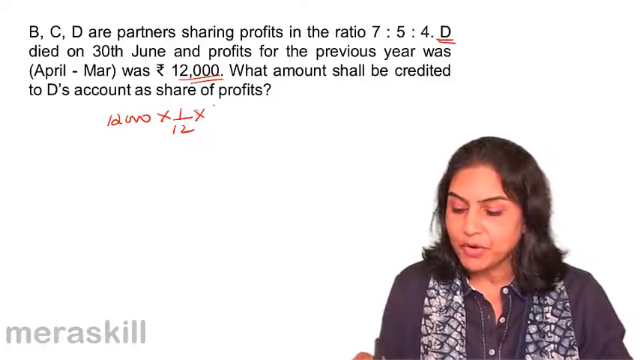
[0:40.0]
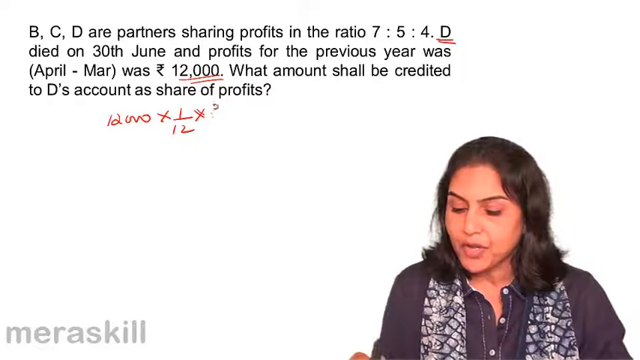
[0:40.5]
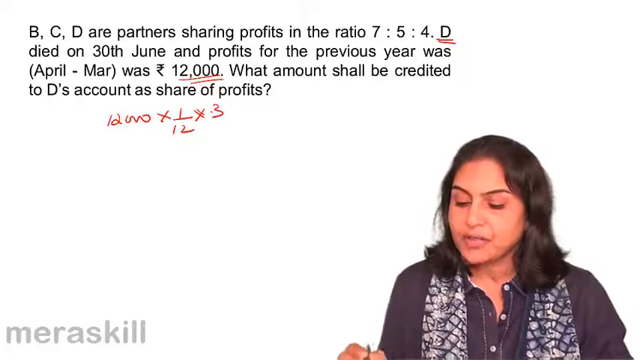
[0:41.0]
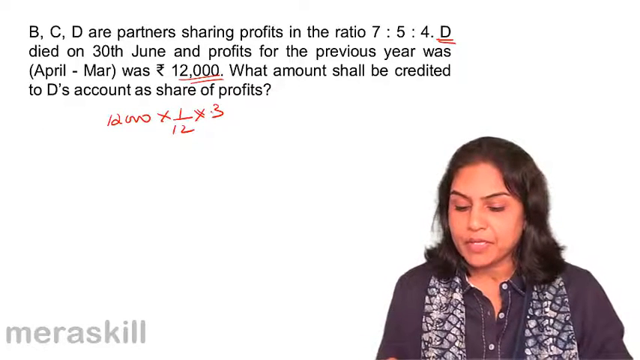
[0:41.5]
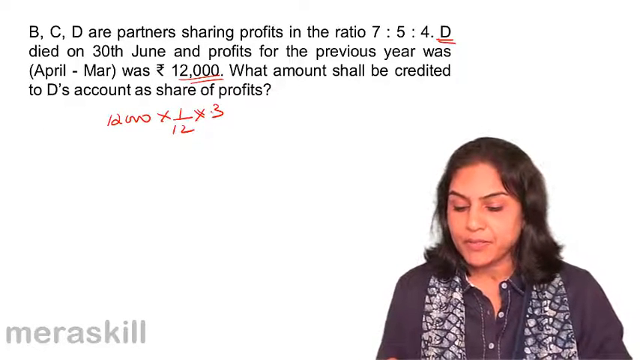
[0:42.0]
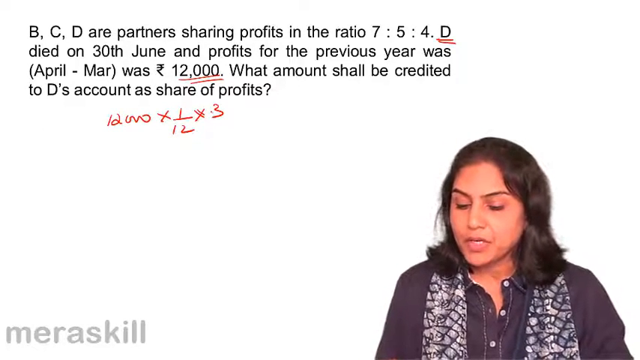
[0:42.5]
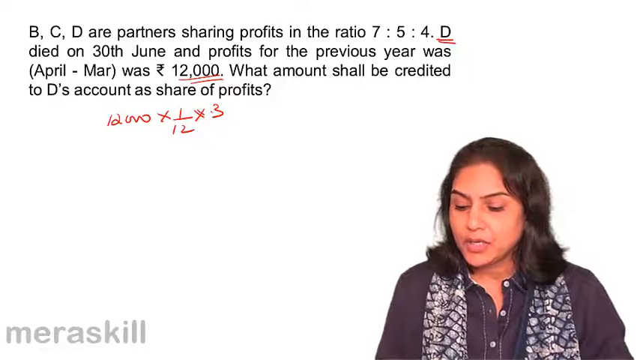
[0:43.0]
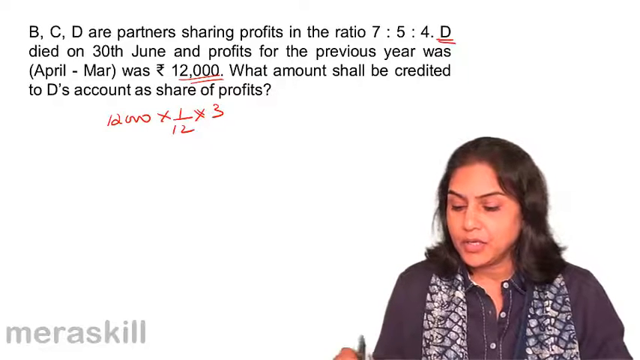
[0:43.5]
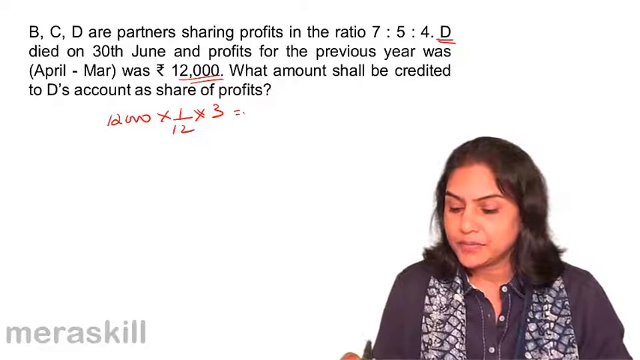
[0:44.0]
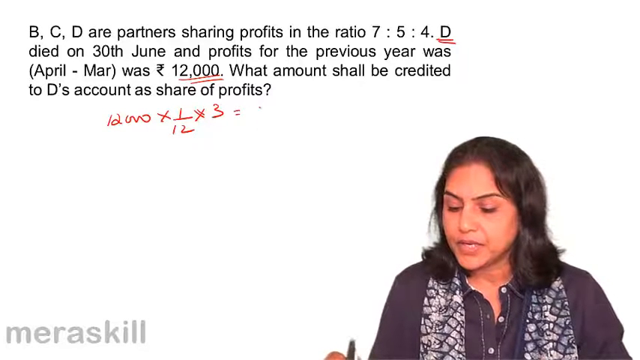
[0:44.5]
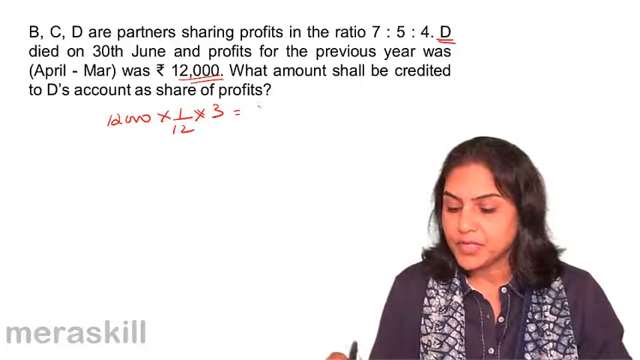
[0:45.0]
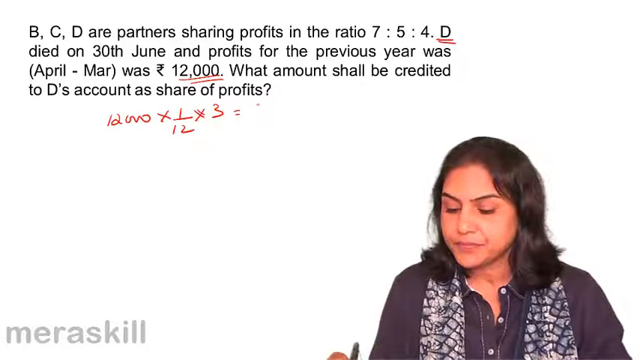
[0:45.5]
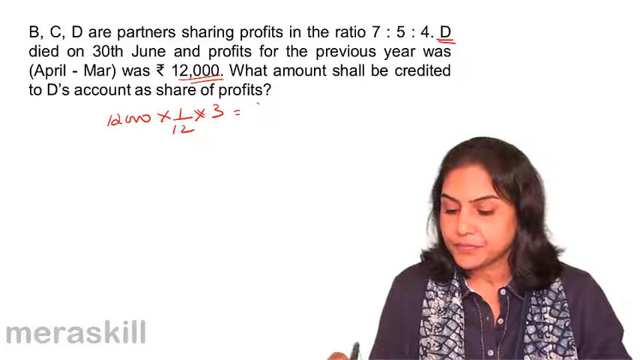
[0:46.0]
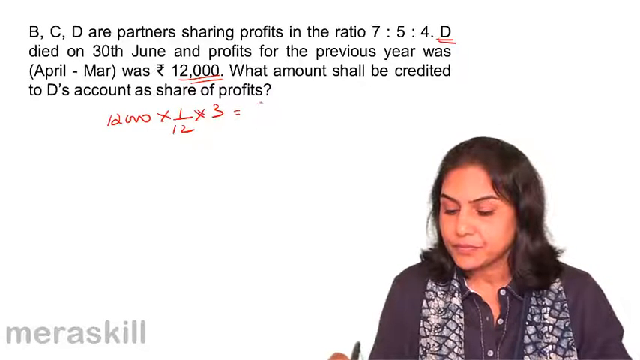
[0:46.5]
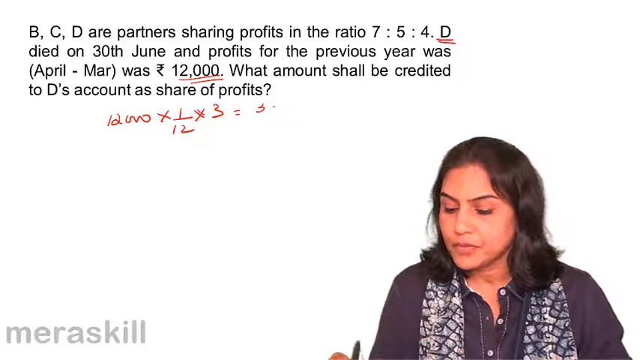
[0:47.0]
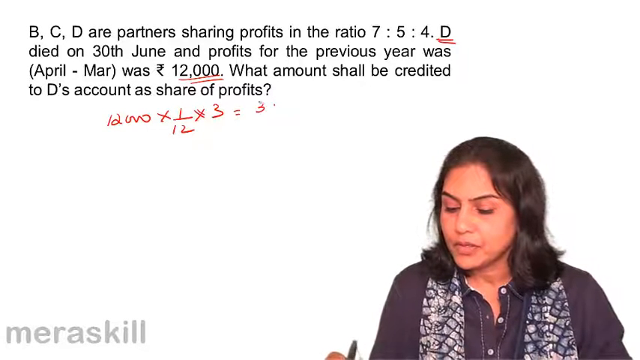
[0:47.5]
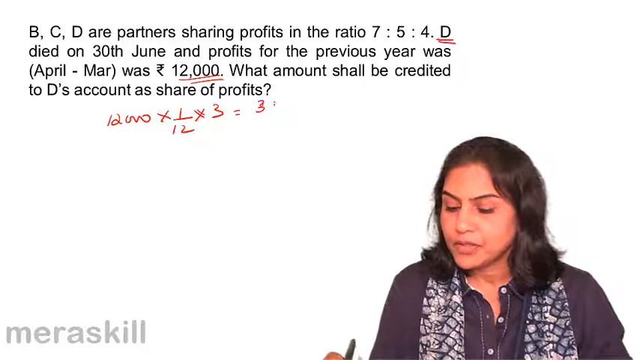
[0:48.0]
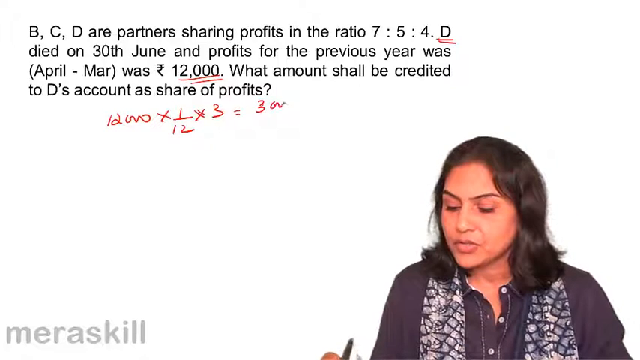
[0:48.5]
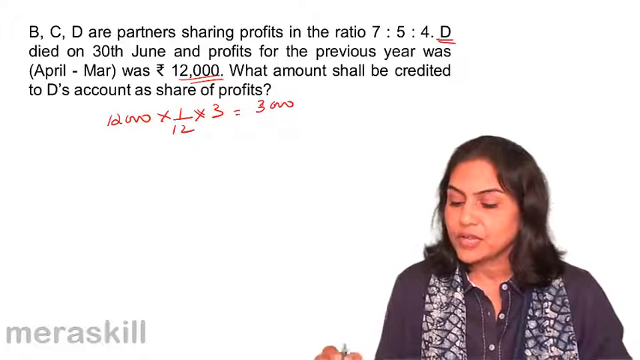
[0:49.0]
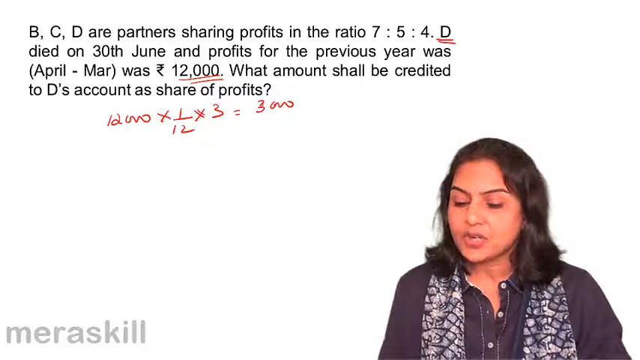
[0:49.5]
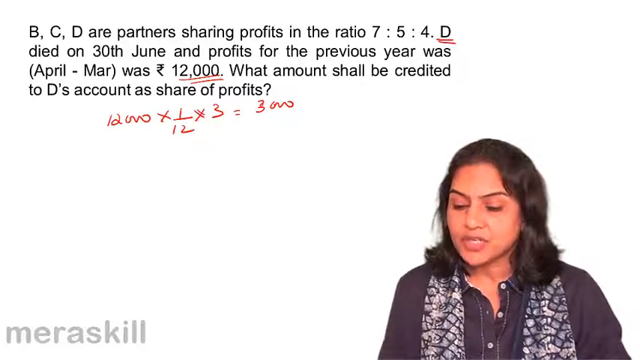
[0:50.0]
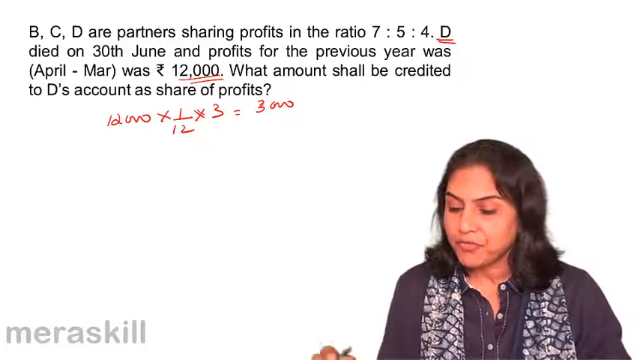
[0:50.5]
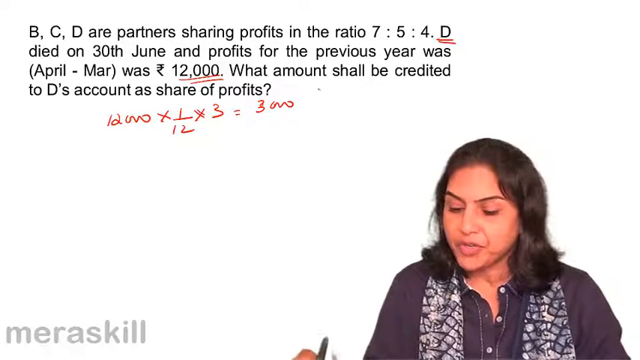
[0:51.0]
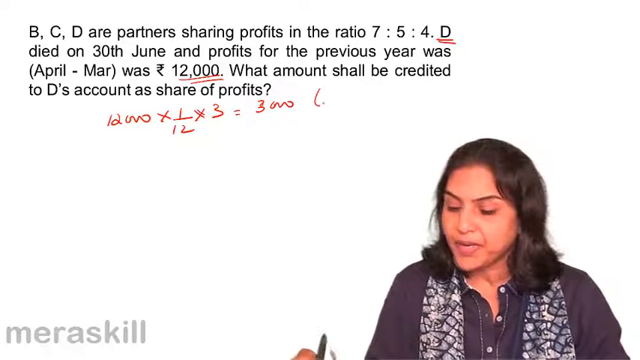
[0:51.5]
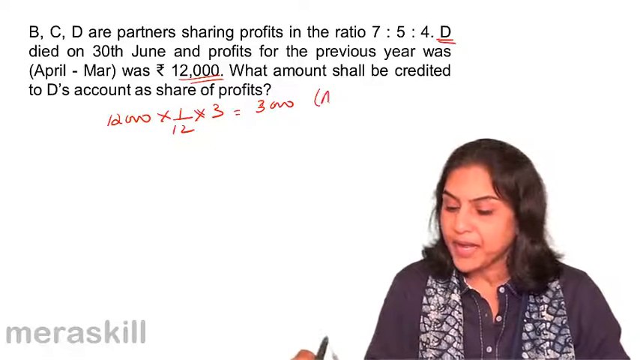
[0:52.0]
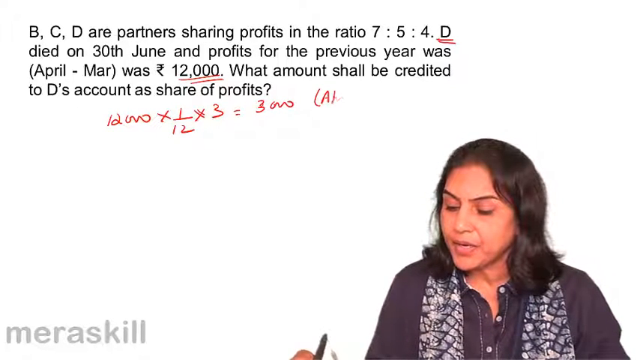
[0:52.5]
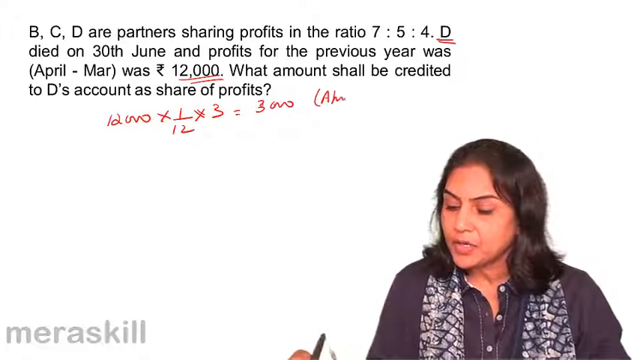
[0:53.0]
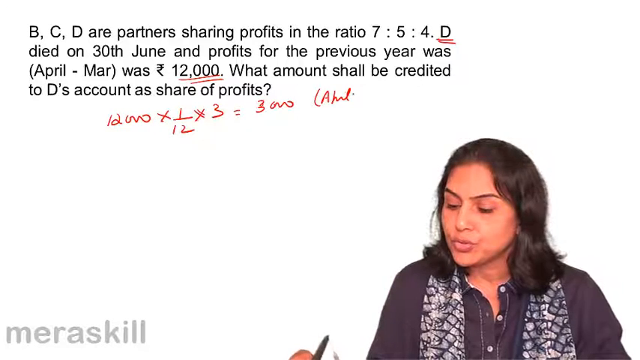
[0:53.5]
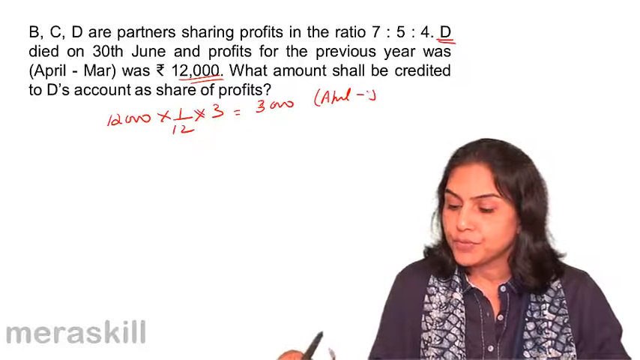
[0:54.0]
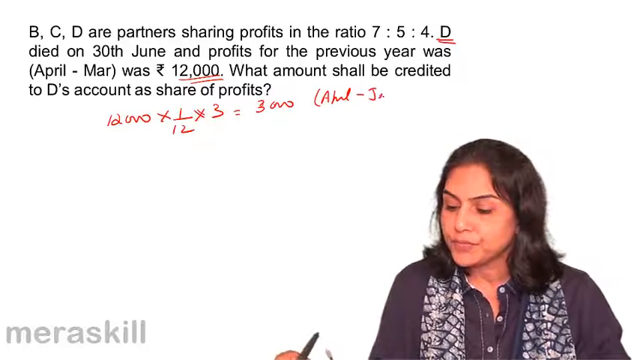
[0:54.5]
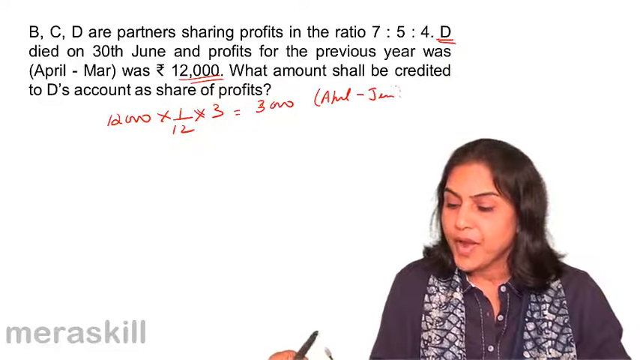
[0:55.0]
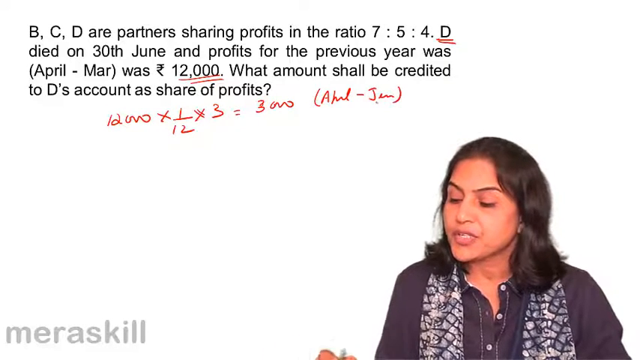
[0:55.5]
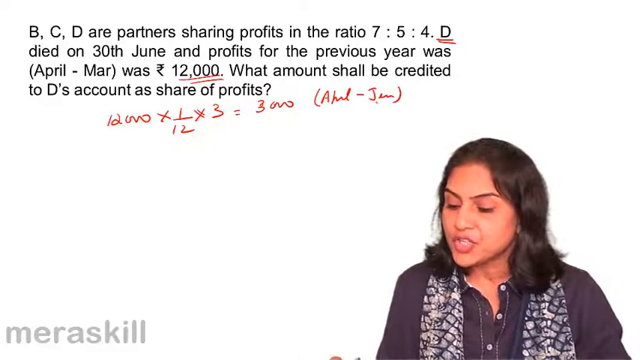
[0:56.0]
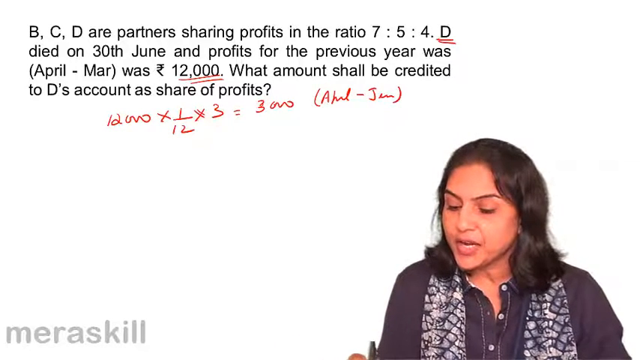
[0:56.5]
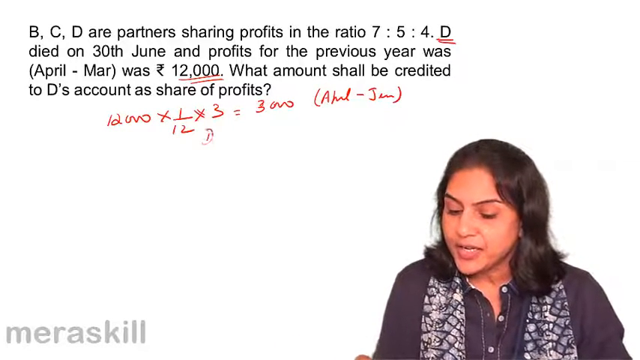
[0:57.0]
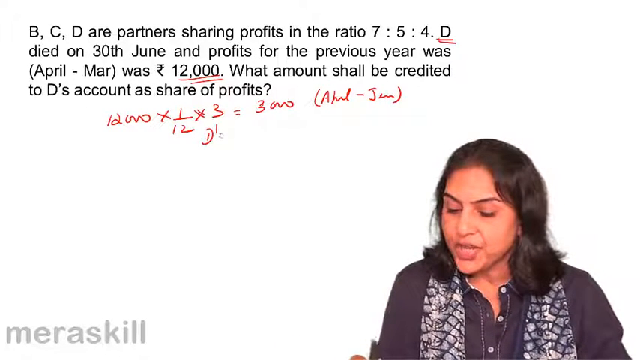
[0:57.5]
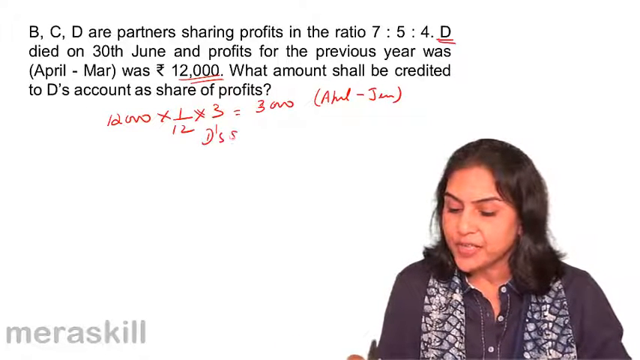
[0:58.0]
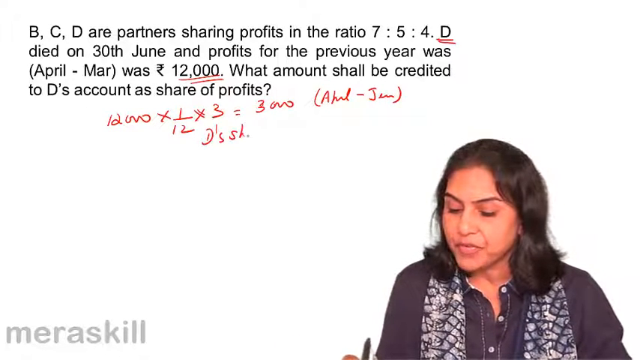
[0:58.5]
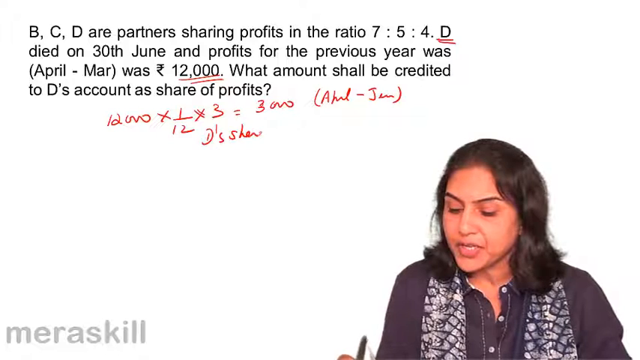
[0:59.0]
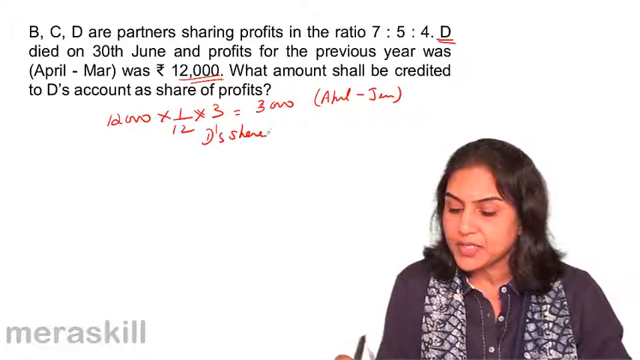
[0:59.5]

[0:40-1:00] The question about partners B, C, D sharing profits in the ratio 7-5-4 stays on screen. The woman speaks, and she has written "12,000 x1/12, x 3 = 3,000" with "(April - June)". She keeps speaking as she writes, continuing her speech while writing.